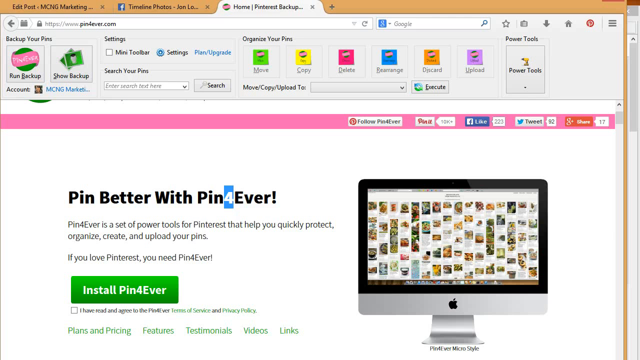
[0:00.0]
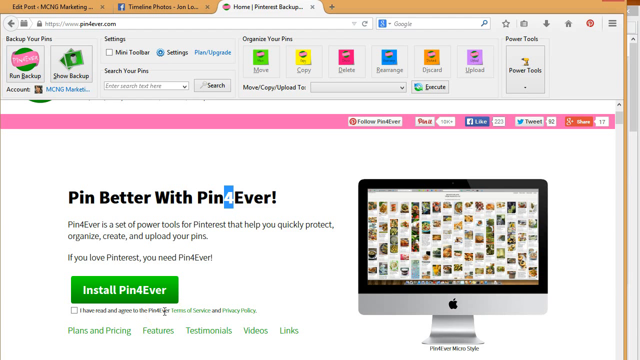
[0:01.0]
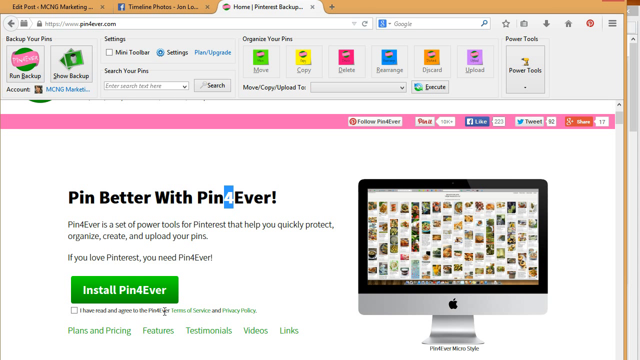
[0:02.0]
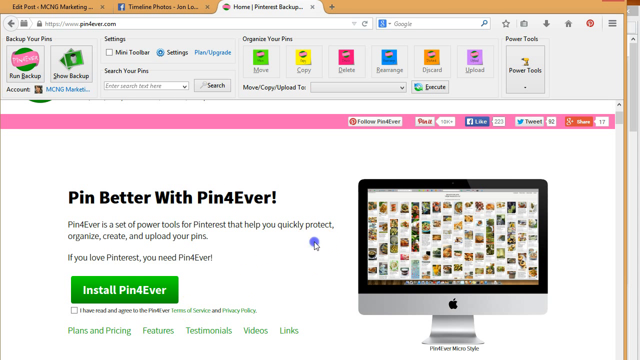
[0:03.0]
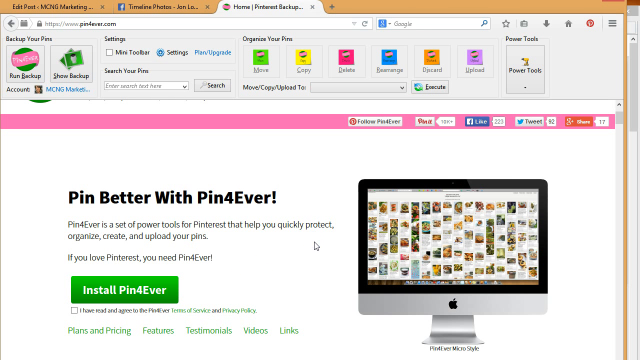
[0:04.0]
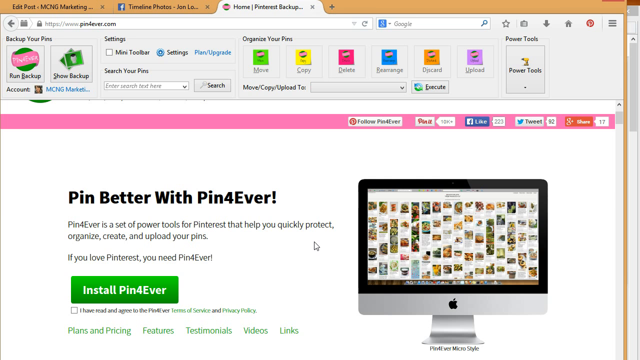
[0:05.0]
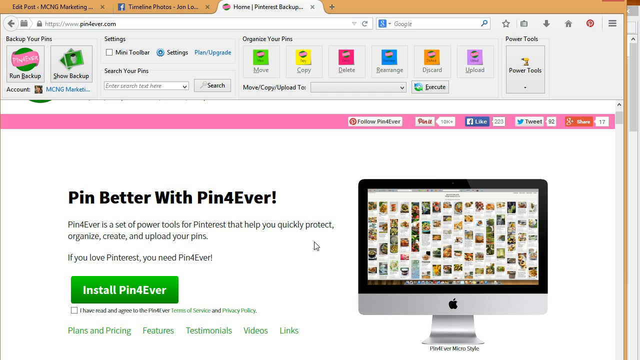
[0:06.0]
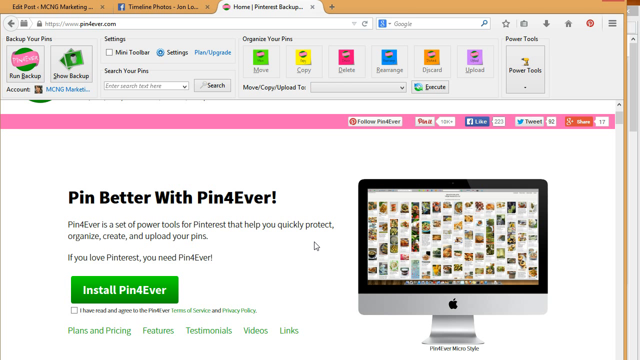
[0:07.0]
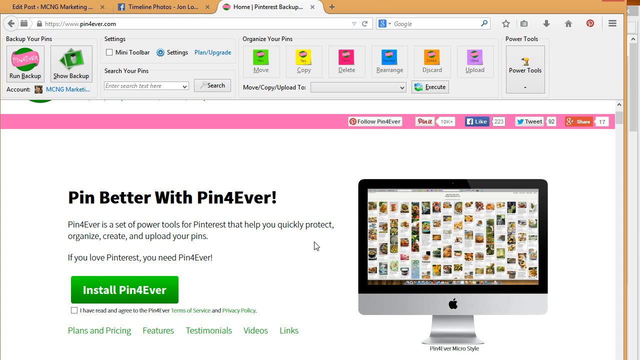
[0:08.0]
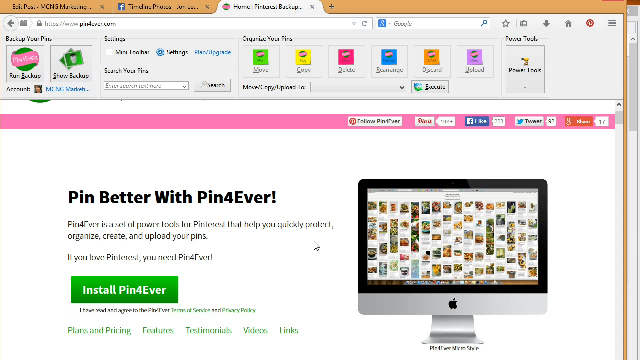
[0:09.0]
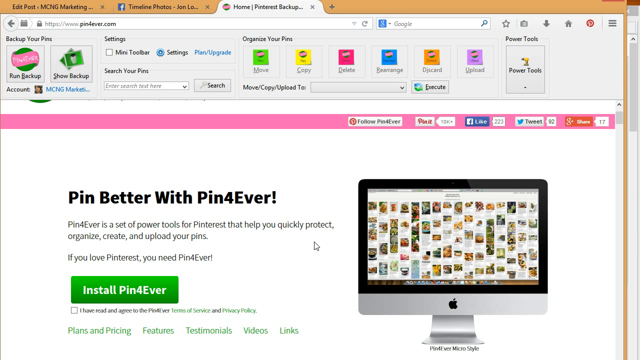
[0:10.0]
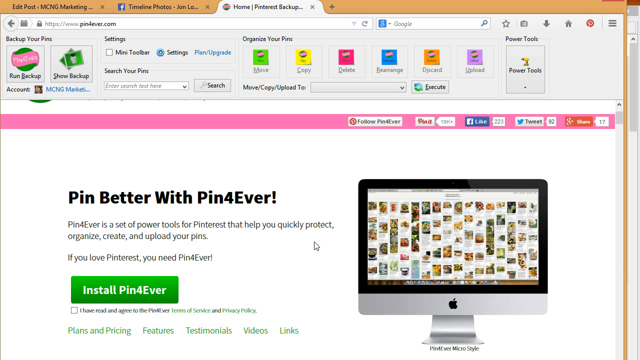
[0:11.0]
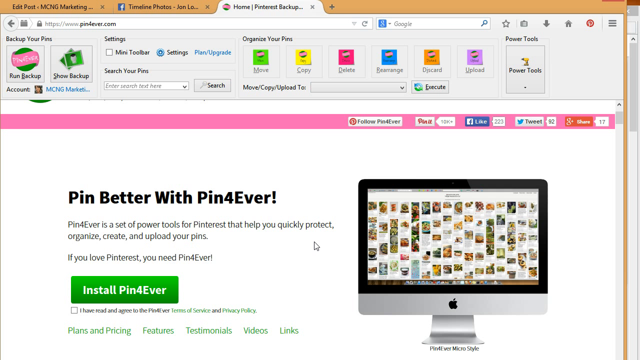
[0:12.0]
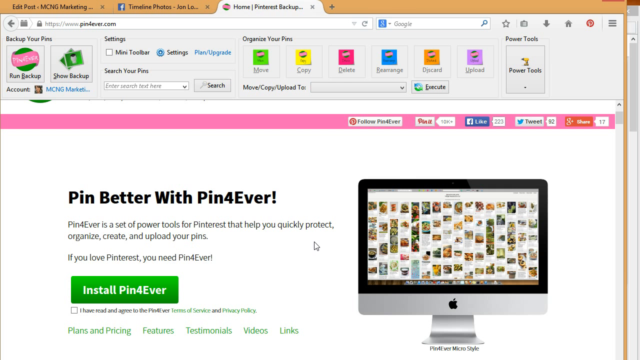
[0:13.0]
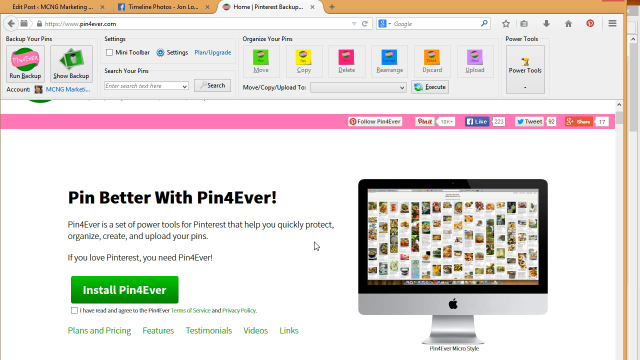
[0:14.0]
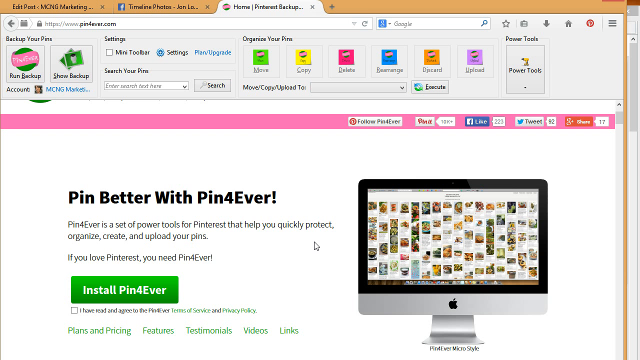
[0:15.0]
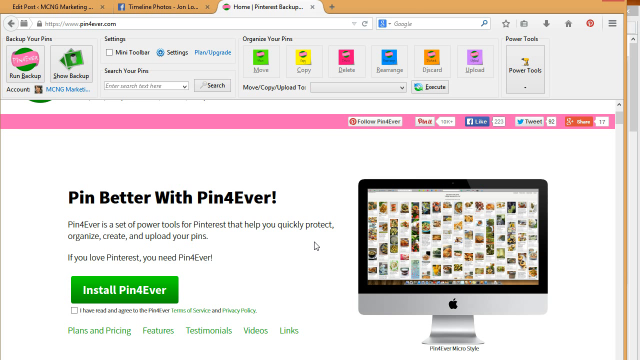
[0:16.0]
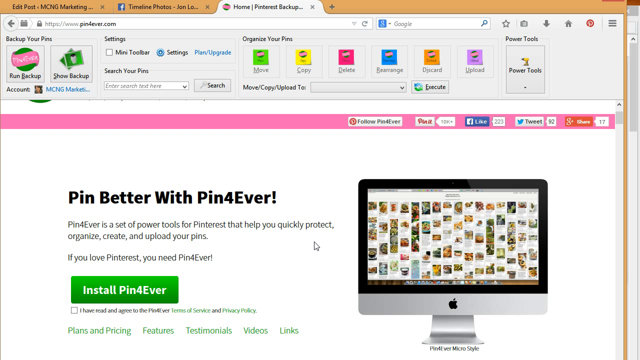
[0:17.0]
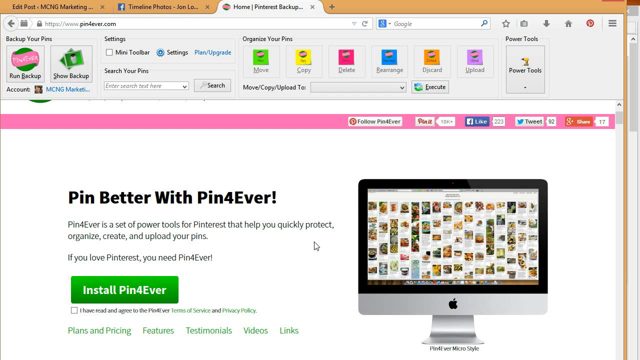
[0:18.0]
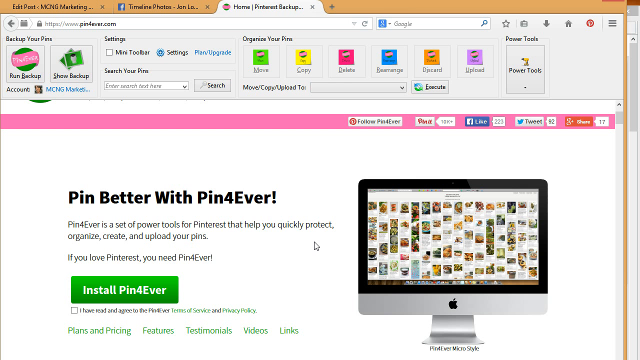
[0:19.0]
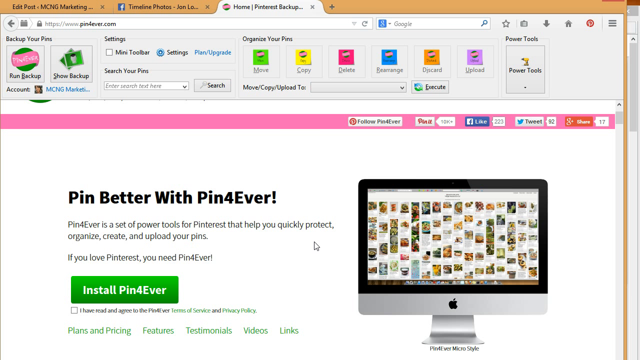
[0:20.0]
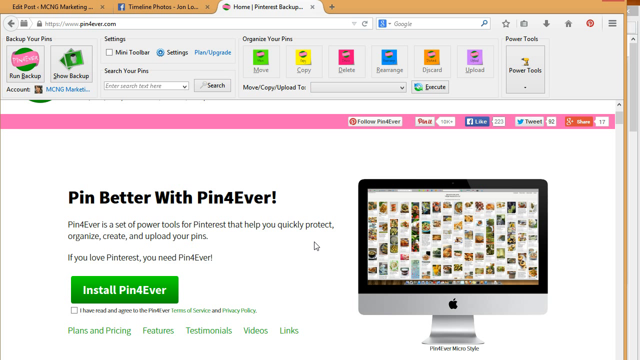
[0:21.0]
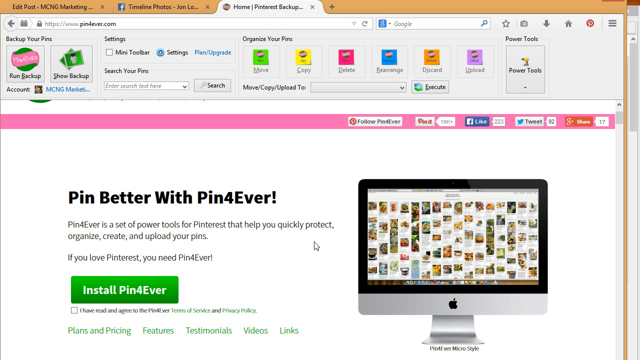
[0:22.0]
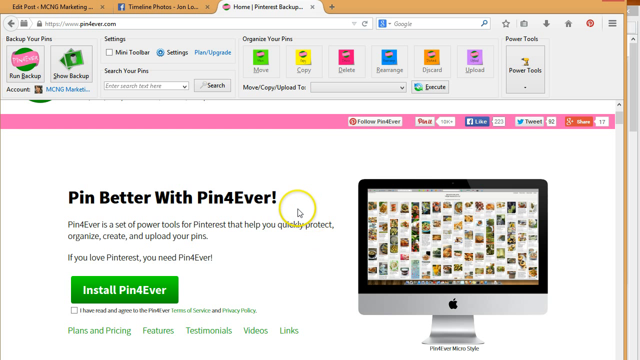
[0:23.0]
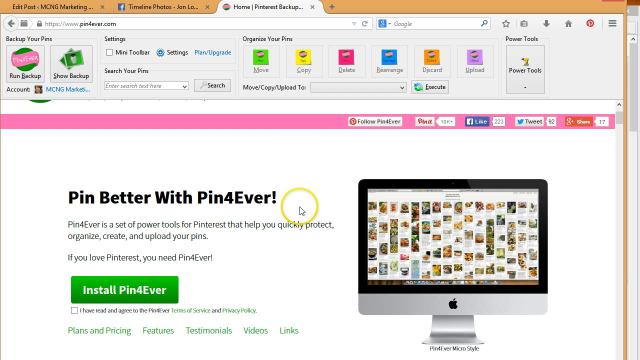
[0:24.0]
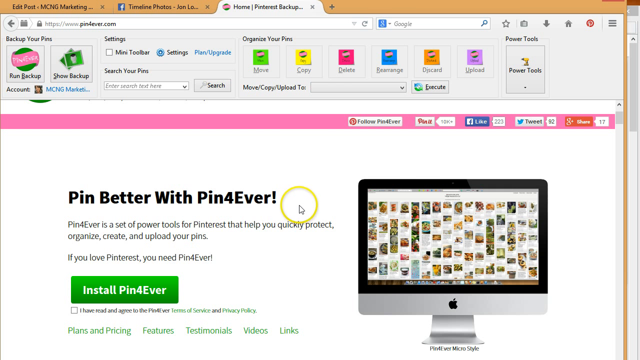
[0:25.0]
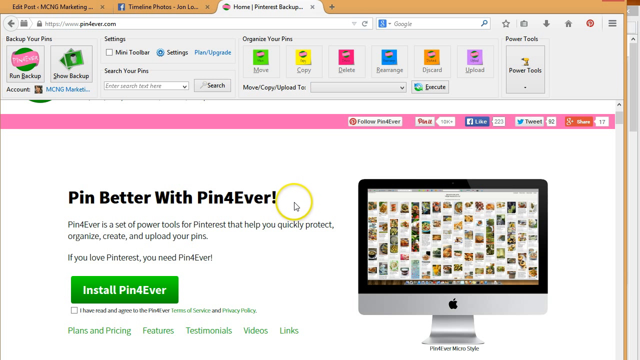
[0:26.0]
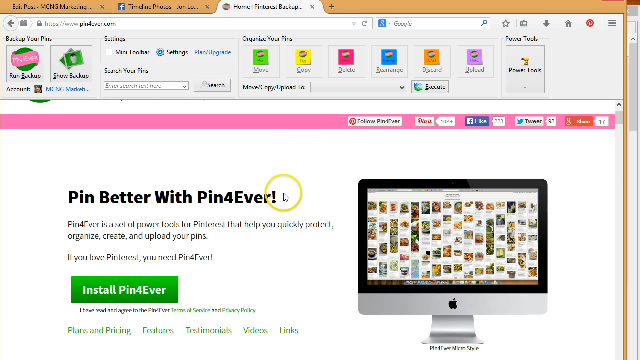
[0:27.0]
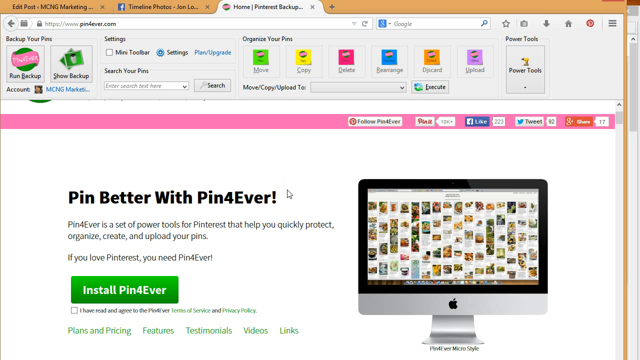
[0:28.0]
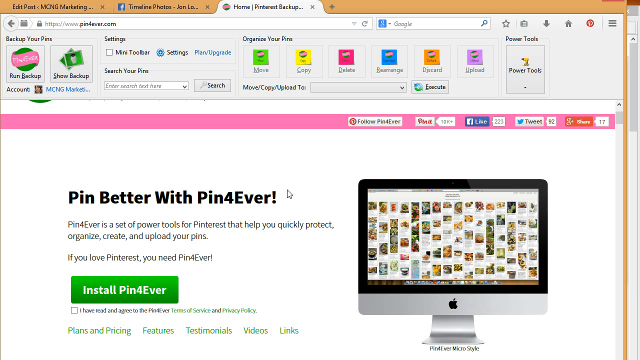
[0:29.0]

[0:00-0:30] A website on a computer page reads "pin better with pin forever!" An install box with a bar reads "install pin forever", and there are links for testimonials, plans and pricing, features, videos, and links. A cursor on the screen is outlined in a yellow circle so it stays visible. A picture of a laptop computer with an Apple logo on it shows pictures of all different things, probably as an example of the program in use. The typical computer icons are at the very top, and the browsers are in brown.